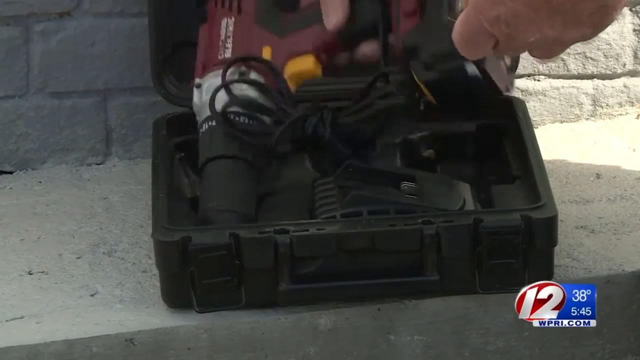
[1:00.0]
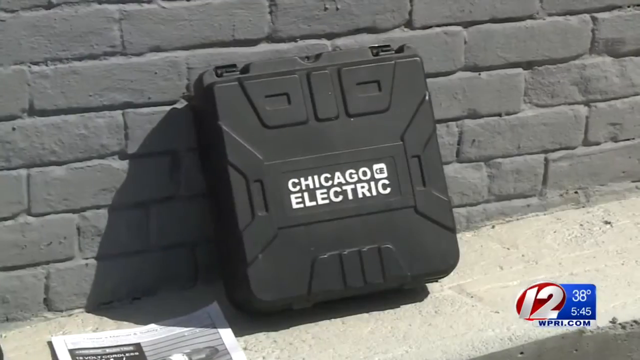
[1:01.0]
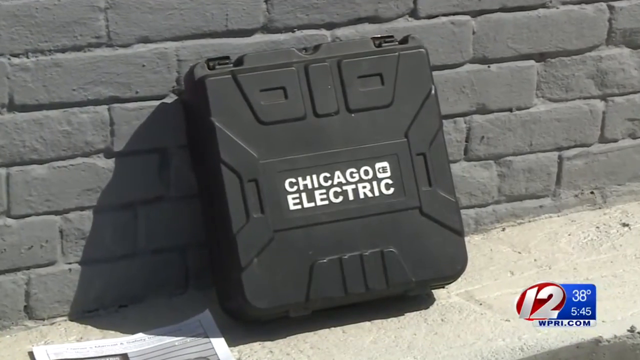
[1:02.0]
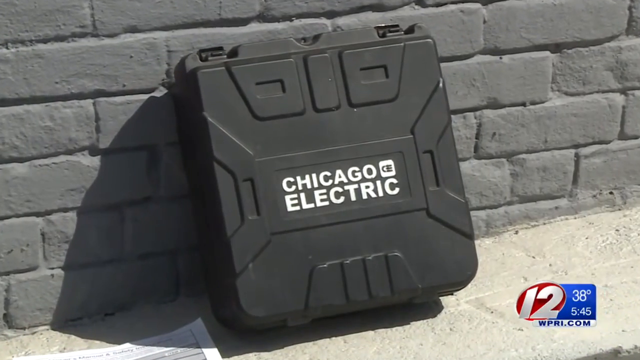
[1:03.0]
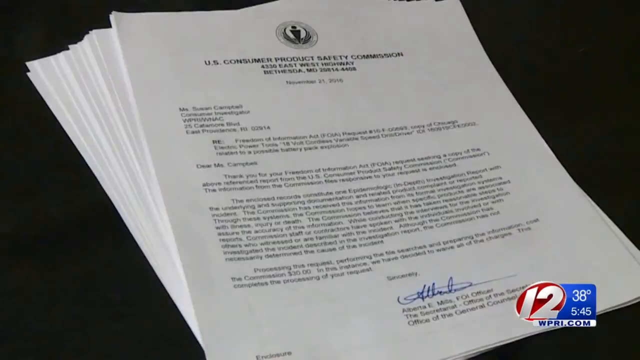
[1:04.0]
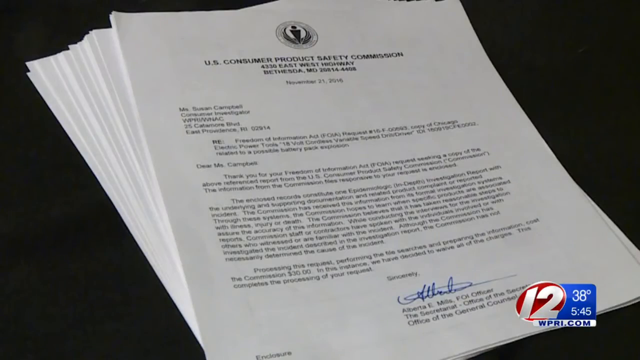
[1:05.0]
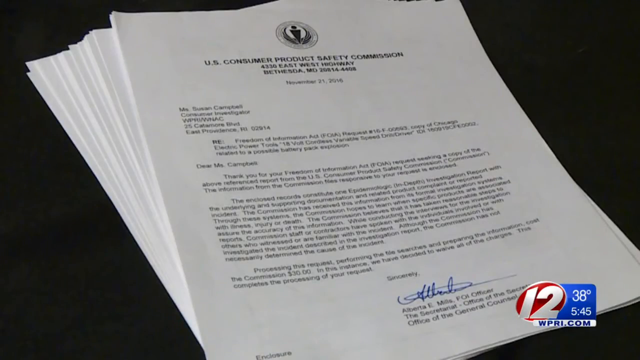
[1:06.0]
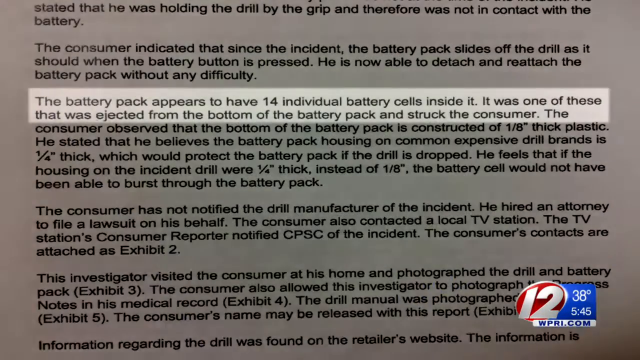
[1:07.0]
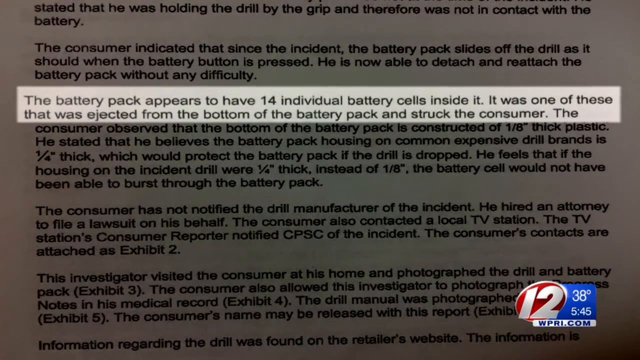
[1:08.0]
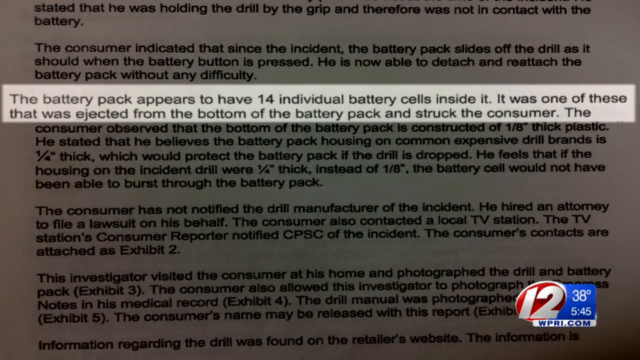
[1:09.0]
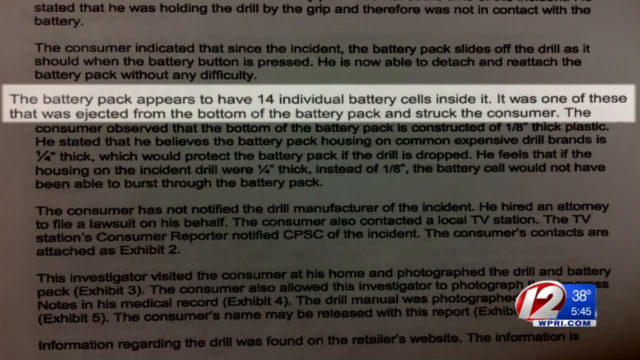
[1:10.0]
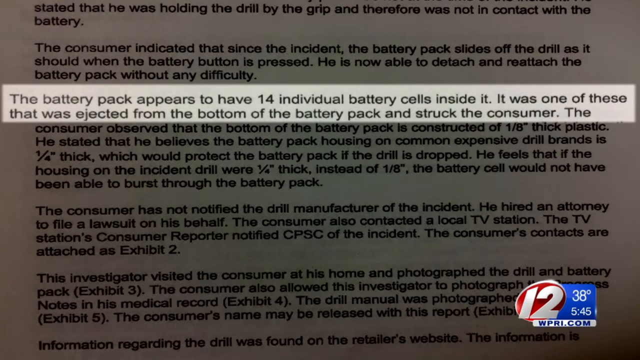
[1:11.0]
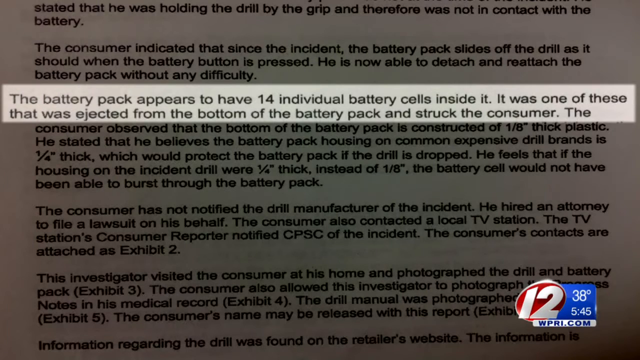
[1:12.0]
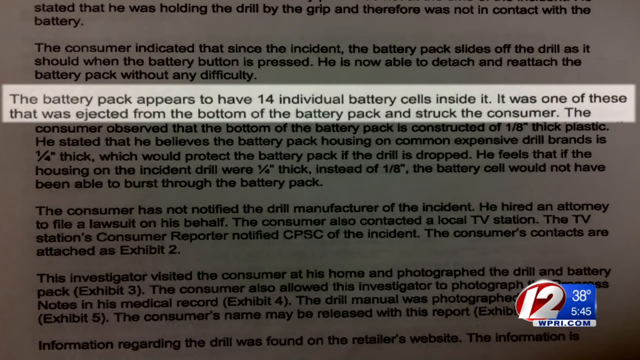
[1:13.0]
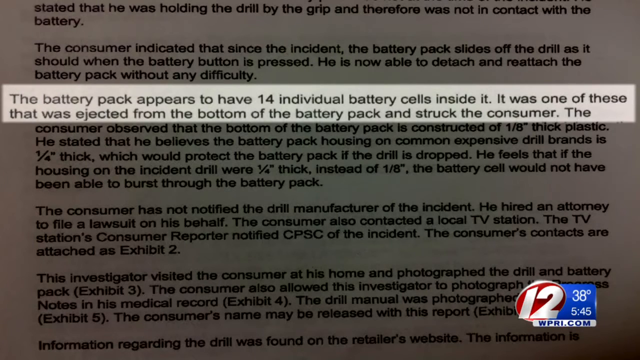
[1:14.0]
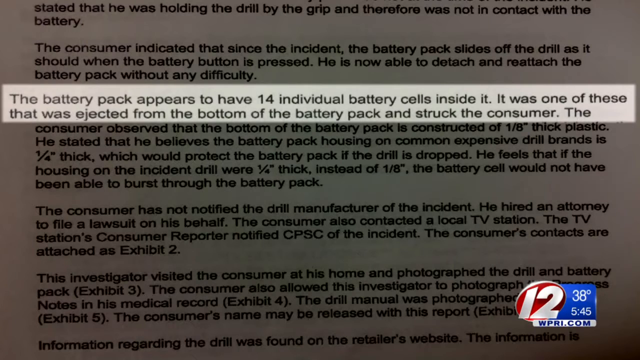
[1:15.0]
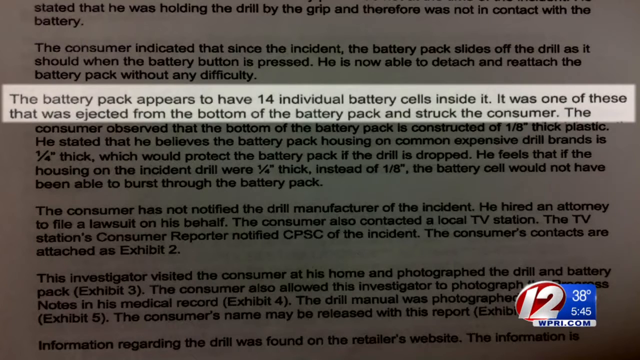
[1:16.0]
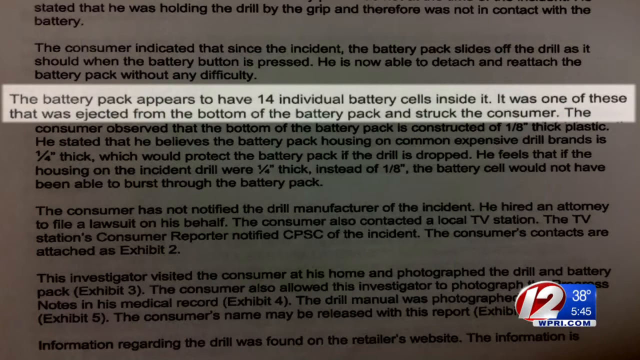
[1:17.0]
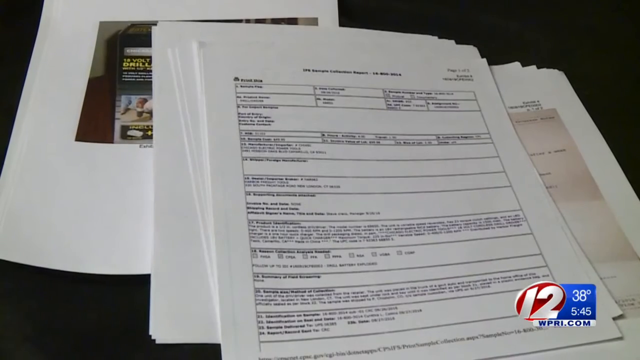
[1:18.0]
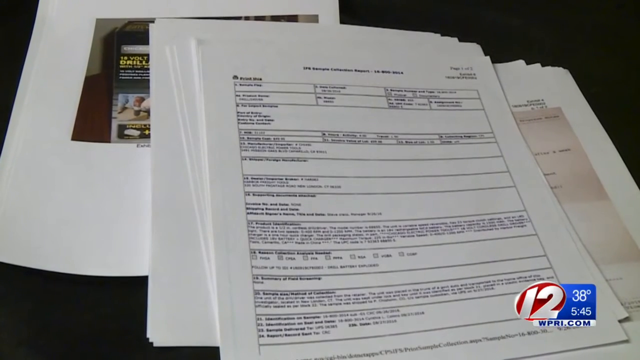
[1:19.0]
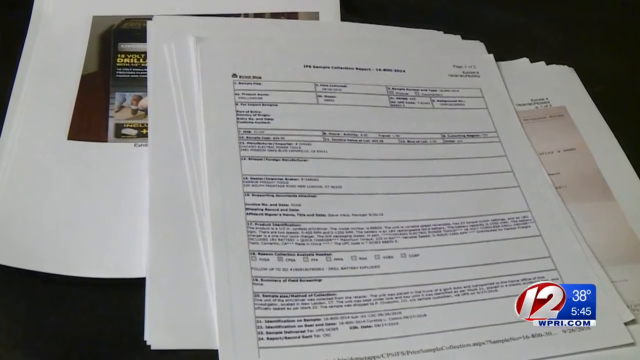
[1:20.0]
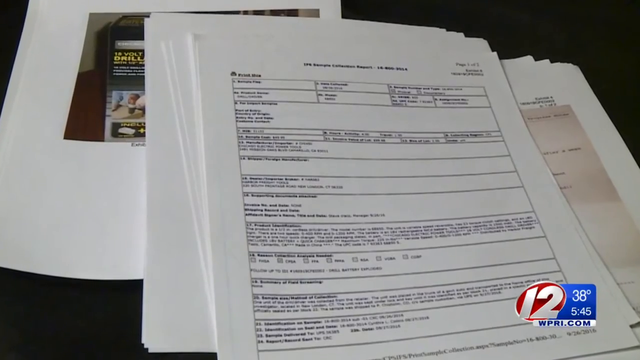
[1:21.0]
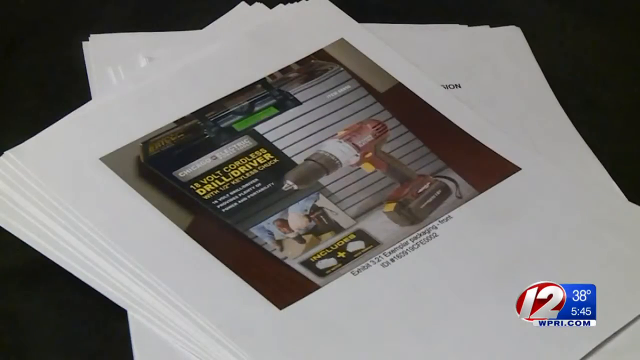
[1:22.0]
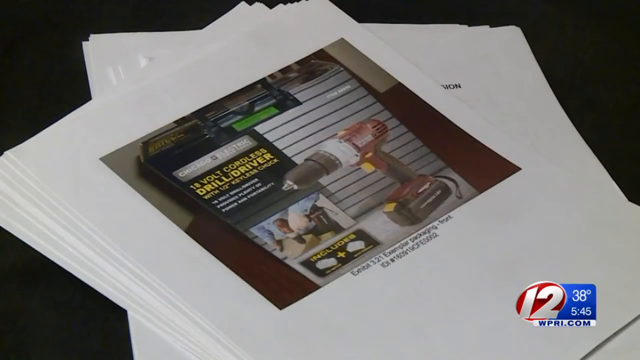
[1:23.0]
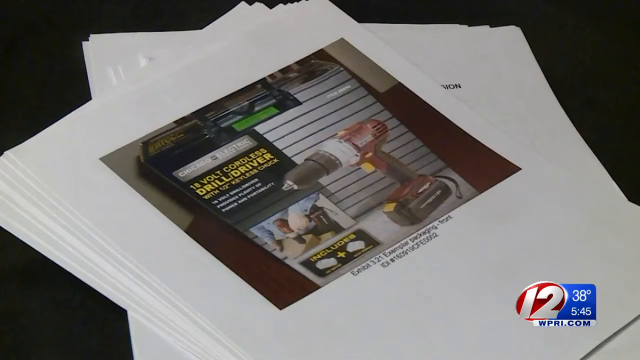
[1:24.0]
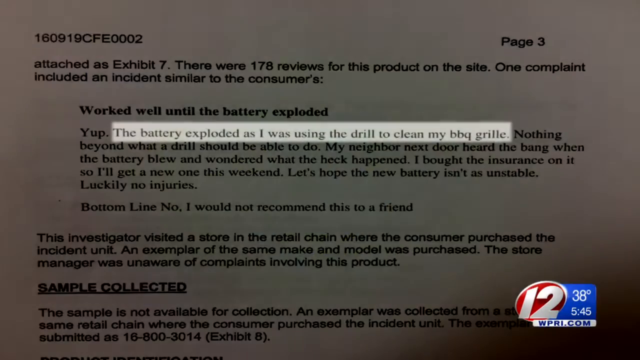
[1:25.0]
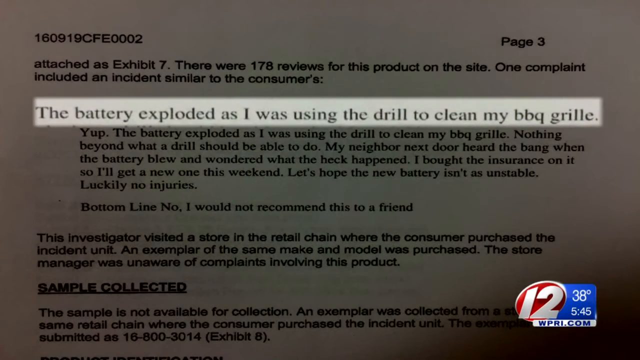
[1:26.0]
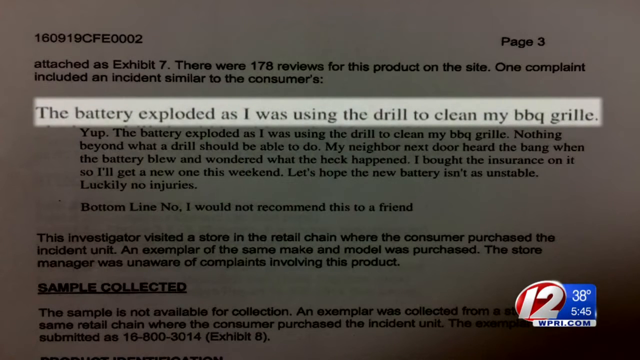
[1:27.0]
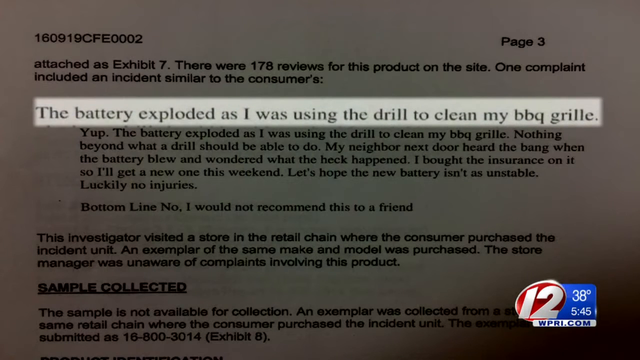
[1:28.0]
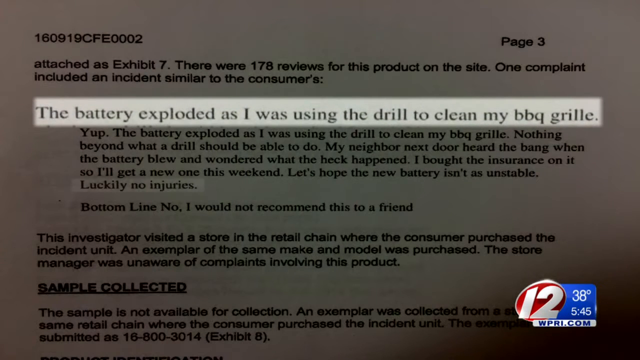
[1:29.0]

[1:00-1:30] A male right hand pulls what looks like a drill out of its carrying case. The video cuts to a black box propped up against a wall, apparently on the side of a street; the box says "Chicago Electric" on the outside. The camera slowly pans into the box, and the image cuts to a pile of papers in the center of the screen, the first of which says "U.S. Consumers Product Safety Commission"; it seems to be some kind of documentation. The next shot zooms in on one of the pages and highlights a sentence that says "the battery pack appears to have 14 individual battery cells inside it. It was one of these that was ejected from the bottom of the battery pack and struck the consumer." The text is pulled out of the paper and zoomed in on, highlighted in a glowing white while the rest of the background goes dark, and the shot stays there for a few seconds.